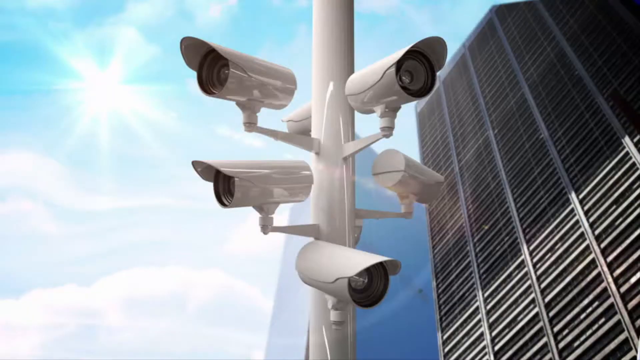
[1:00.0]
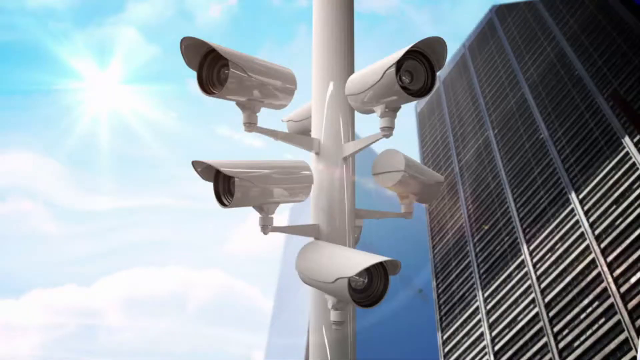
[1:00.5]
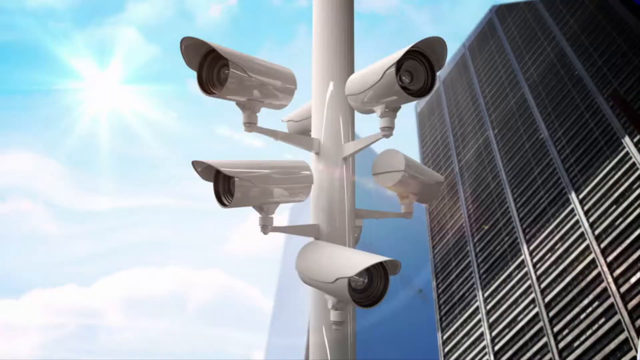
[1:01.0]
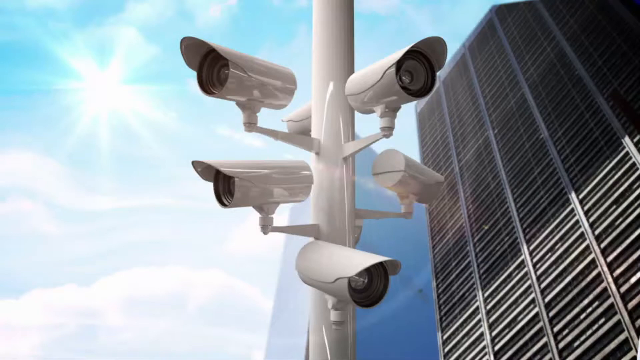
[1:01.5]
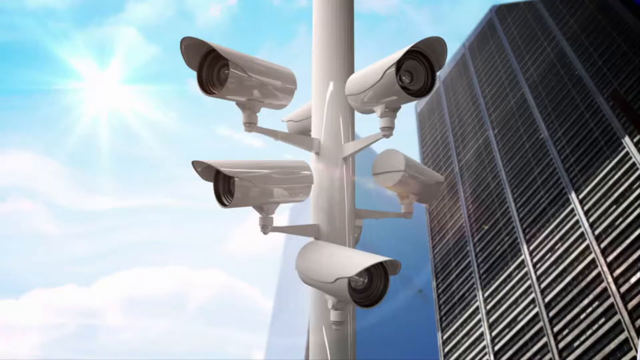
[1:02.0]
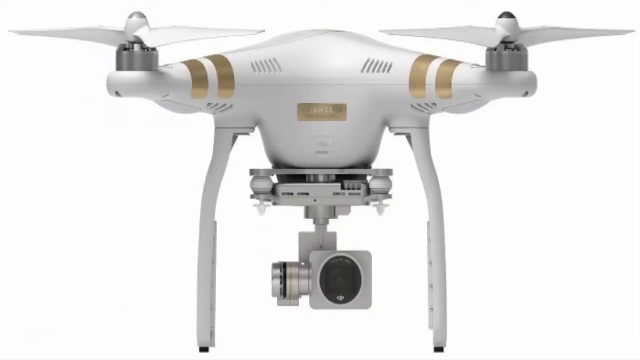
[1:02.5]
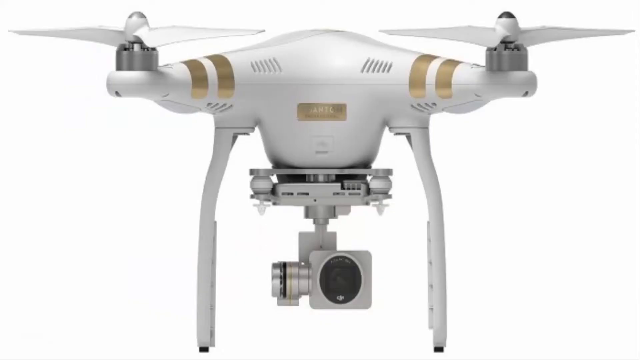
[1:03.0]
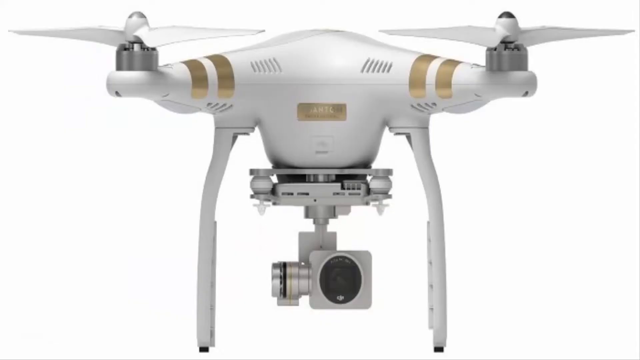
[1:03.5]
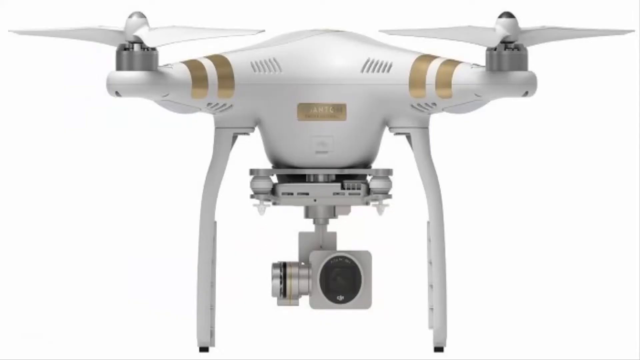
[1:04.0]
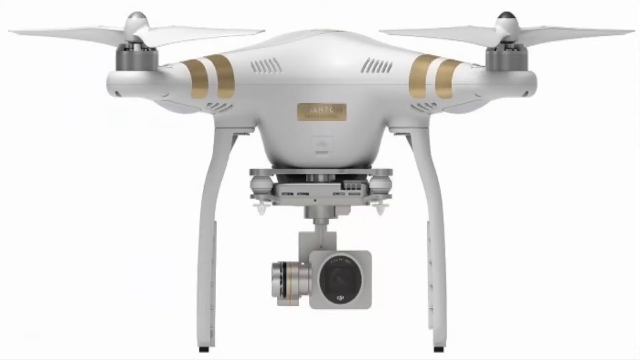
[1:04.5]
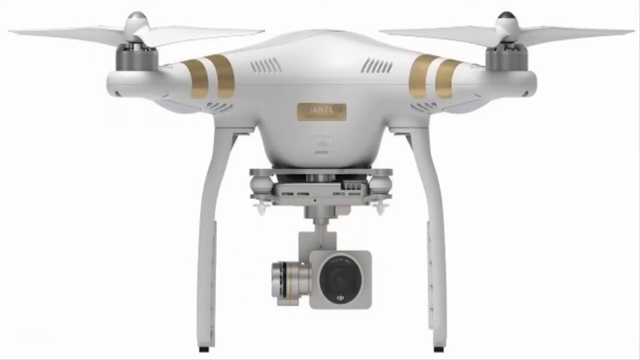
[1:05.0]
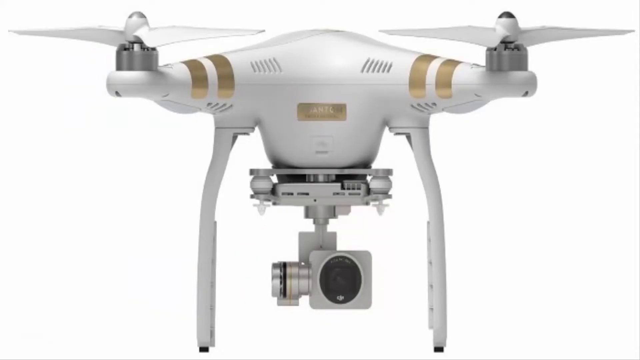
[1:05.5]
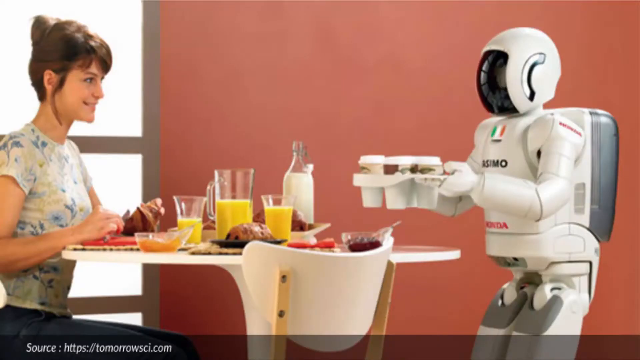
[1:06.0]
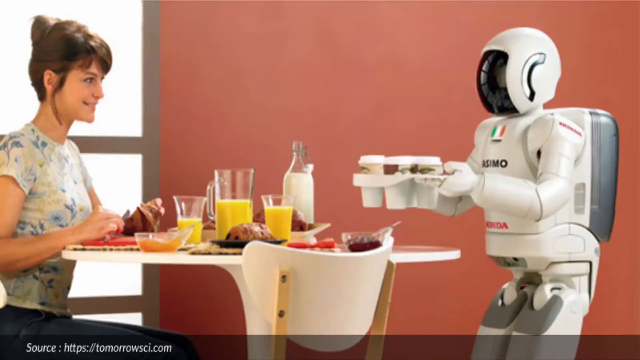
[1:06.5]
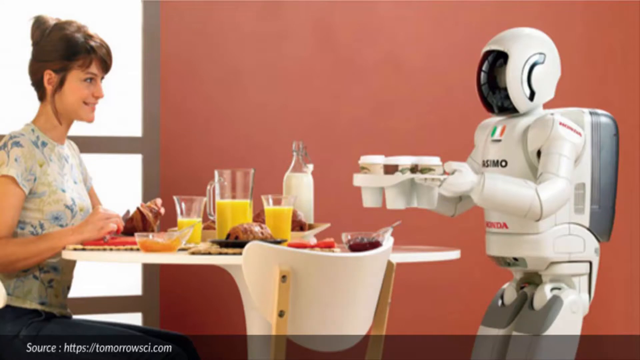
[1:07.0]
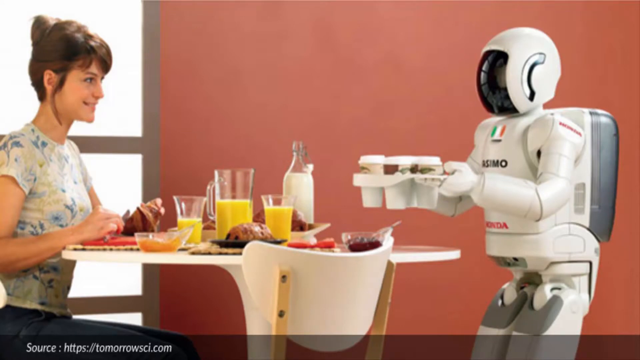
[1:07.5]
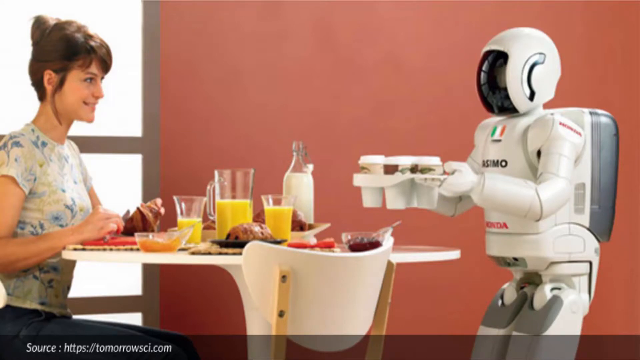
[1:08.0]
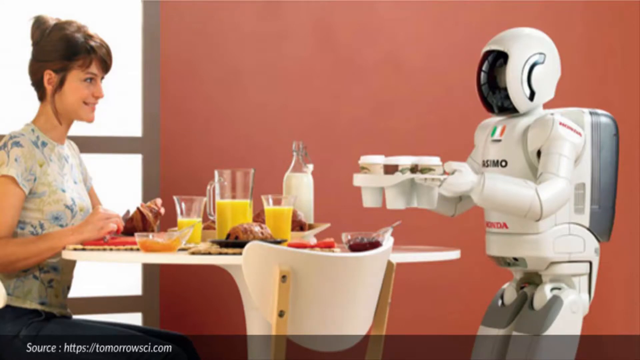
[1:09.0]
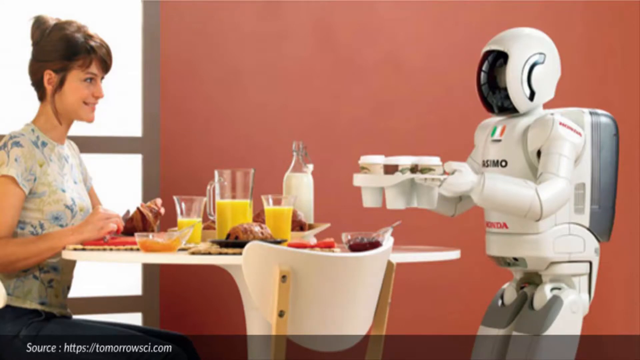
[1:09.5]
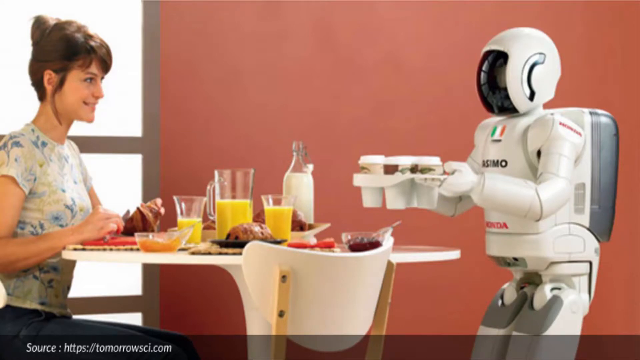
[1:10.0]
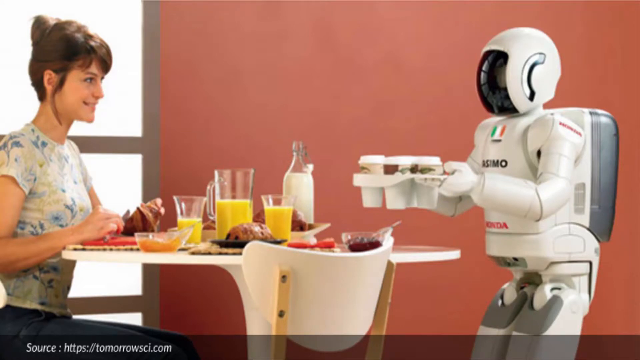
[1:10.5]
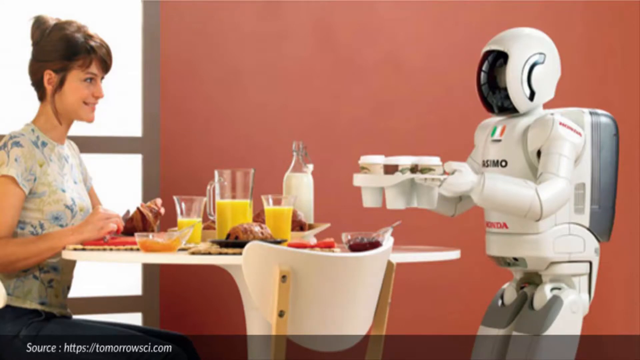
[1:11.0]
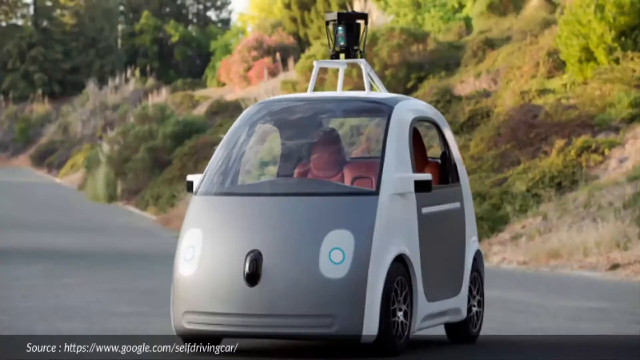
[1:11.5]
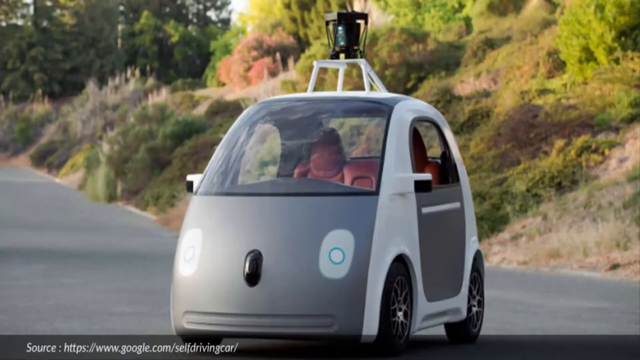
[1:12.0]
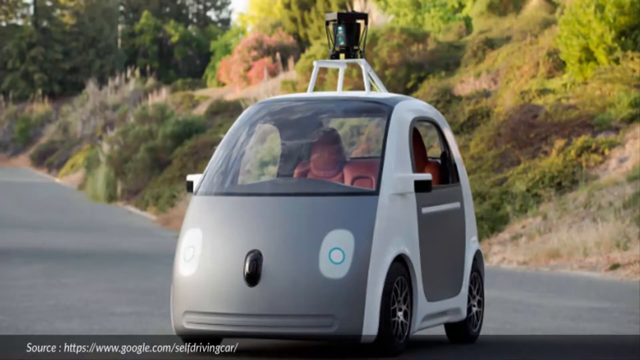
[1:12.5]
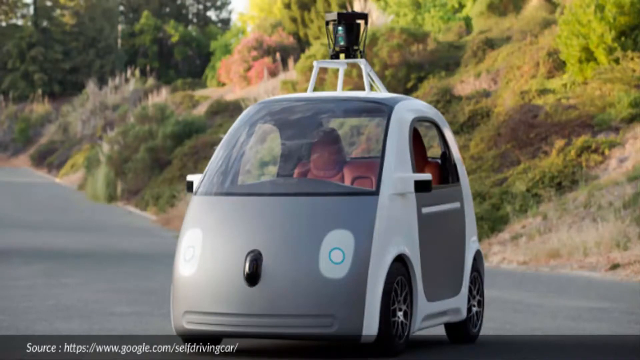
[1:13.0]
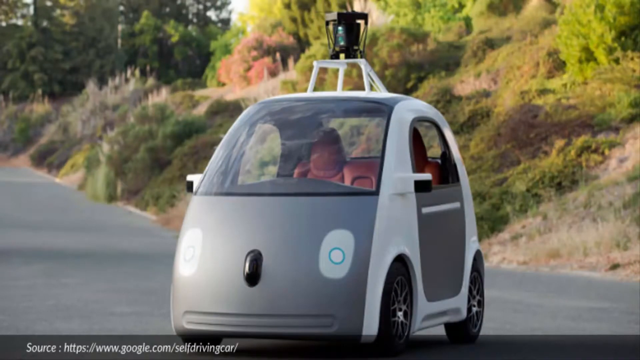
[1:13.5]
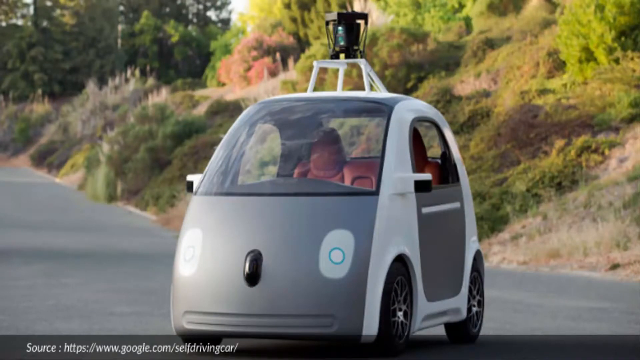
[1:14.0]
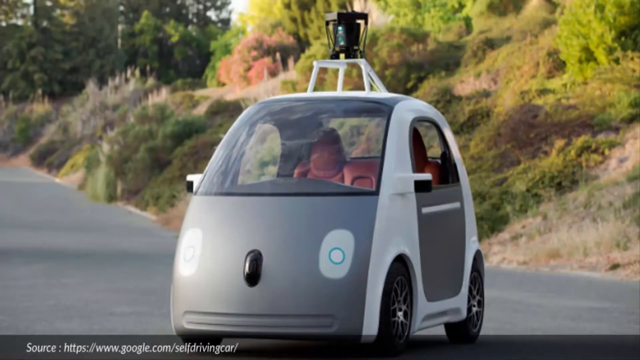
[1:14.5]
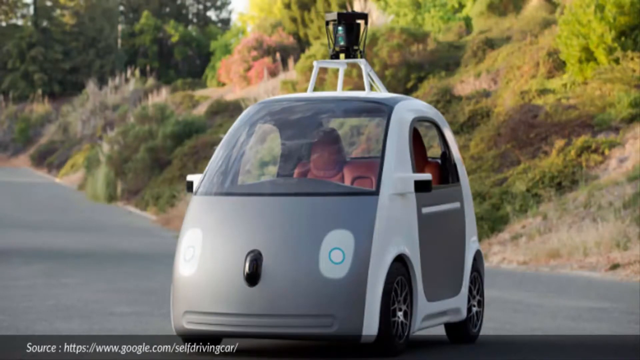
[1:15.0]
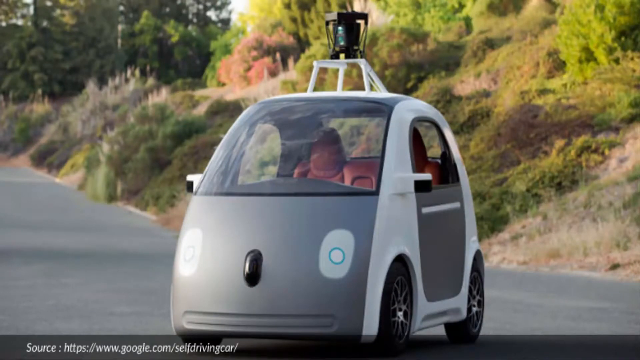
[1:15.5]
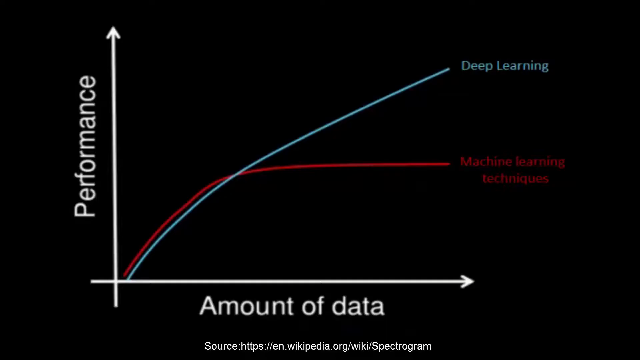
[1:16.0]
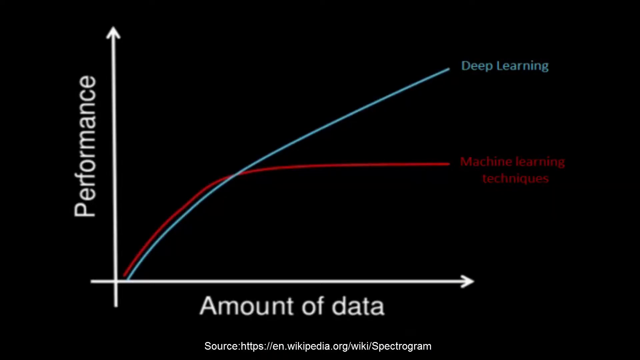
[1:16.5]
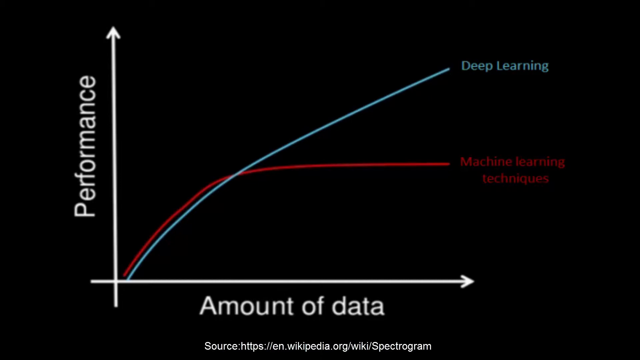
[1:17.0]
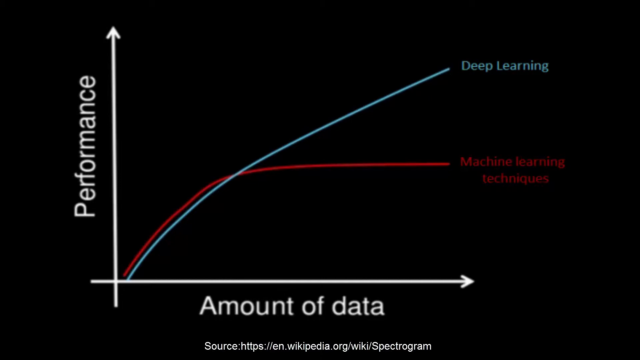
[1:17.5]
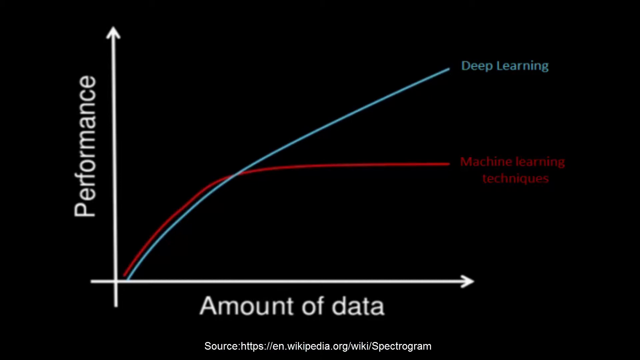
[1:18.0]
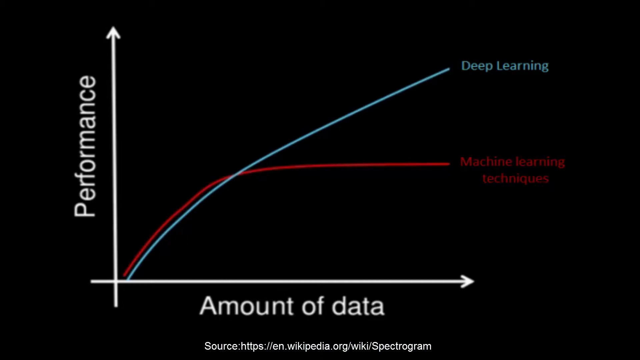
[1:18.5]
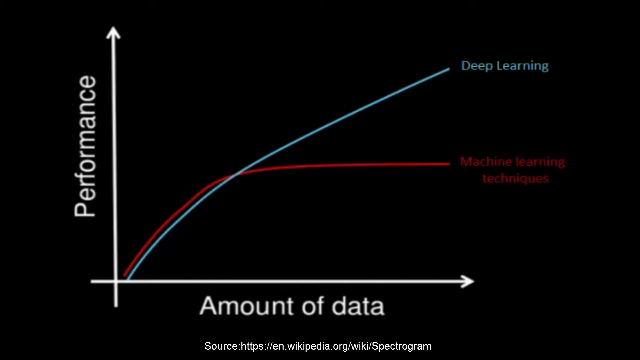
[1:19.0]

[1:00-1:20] The cameras surround a white pole, and all of the cameras are white as well. Behind it are two skyscrapers; the one on the right is gray and dark. On the left side of the image, the sun beams against a light blue background. The video then cuts to a white drone with gold lines, with a camera below it facing the viewer, against a white background. Next it cuts to an image of a white robot serving food to a woman sitting at a table. The woman has brown hair and wears a dress. There is a lot of food on the table, which looks to include orange juice, a bottle of milk and breakfast-type food. The robot looks like it is holding coffee in its hand.